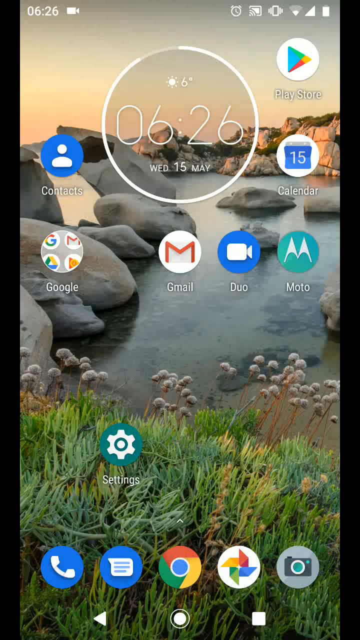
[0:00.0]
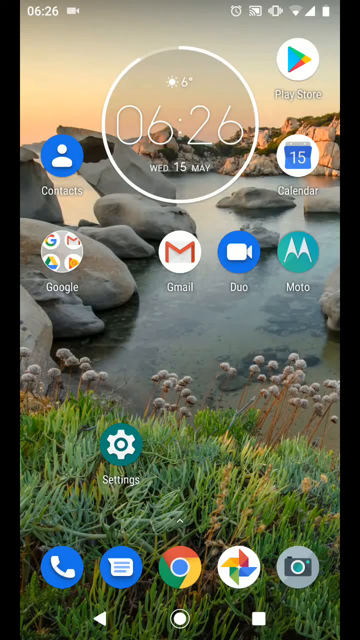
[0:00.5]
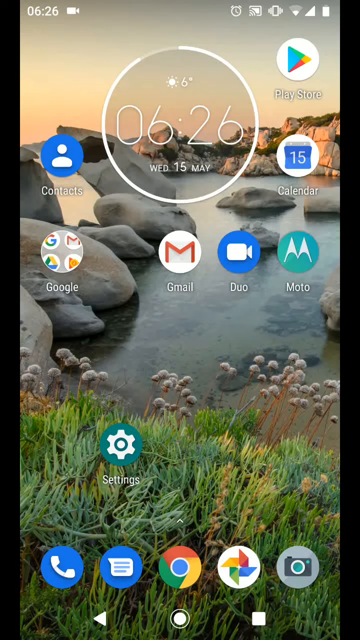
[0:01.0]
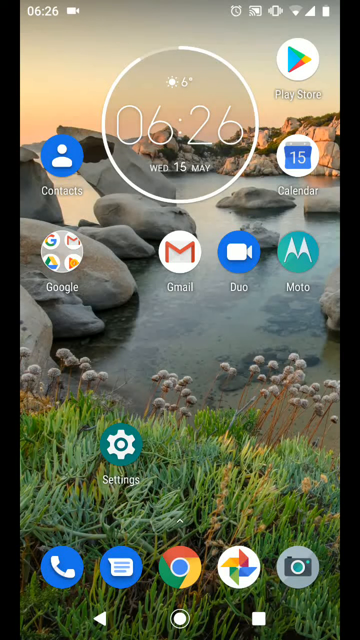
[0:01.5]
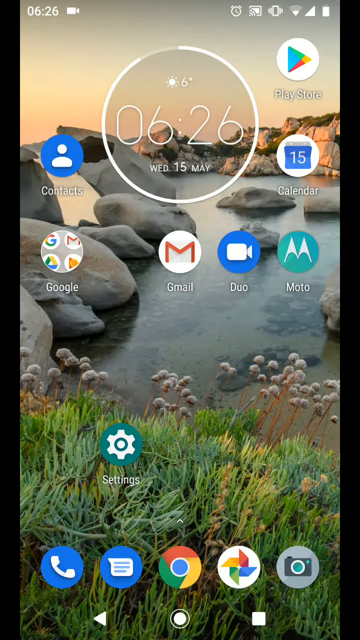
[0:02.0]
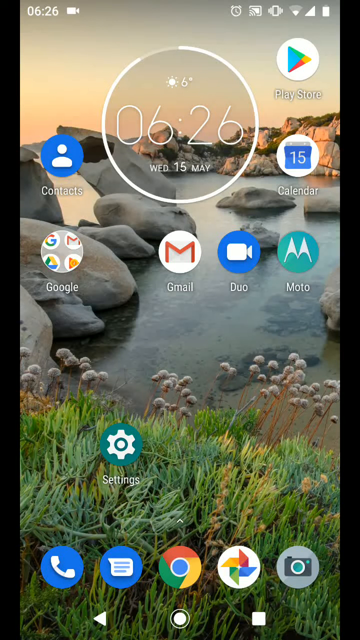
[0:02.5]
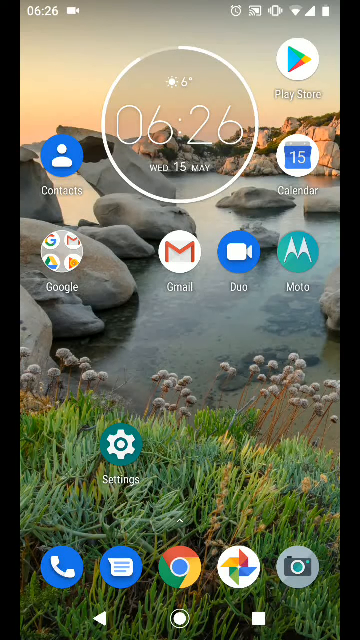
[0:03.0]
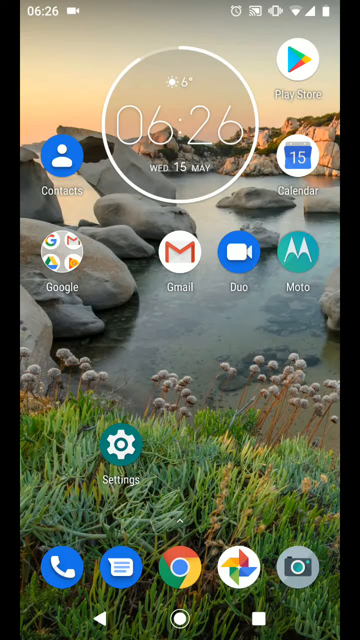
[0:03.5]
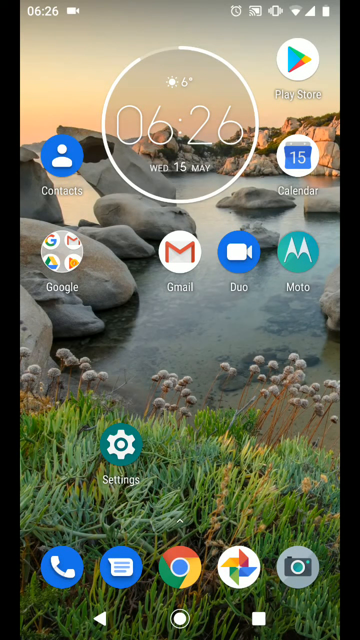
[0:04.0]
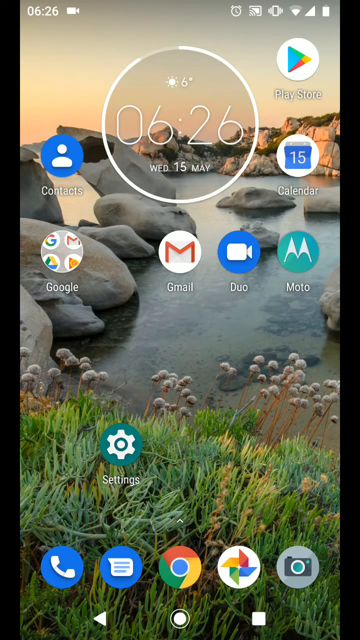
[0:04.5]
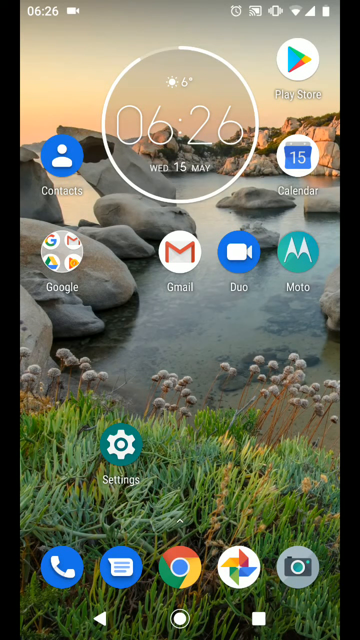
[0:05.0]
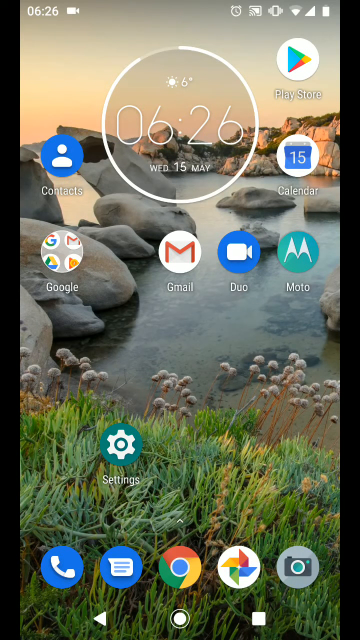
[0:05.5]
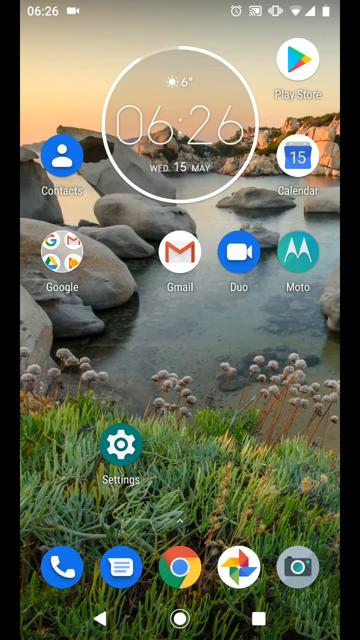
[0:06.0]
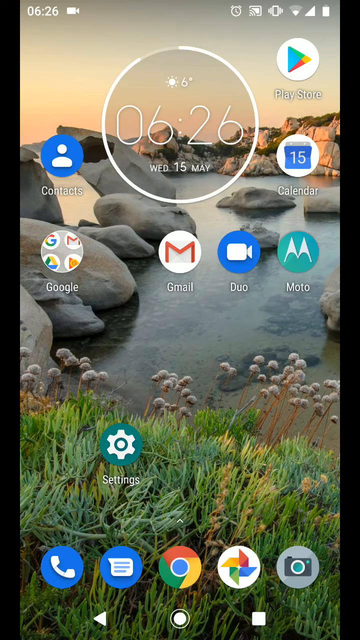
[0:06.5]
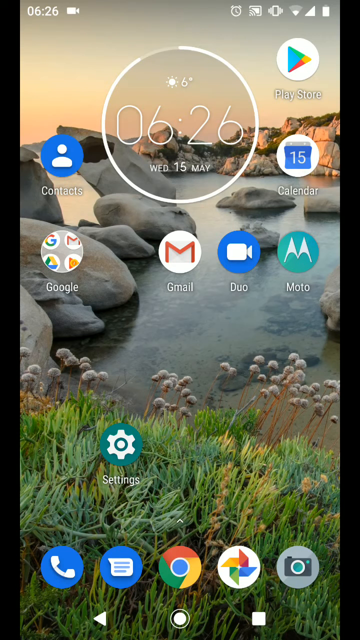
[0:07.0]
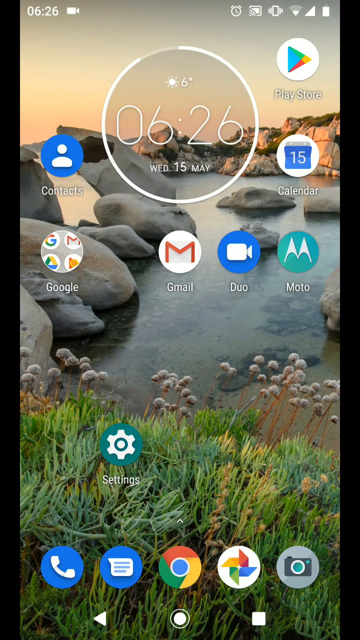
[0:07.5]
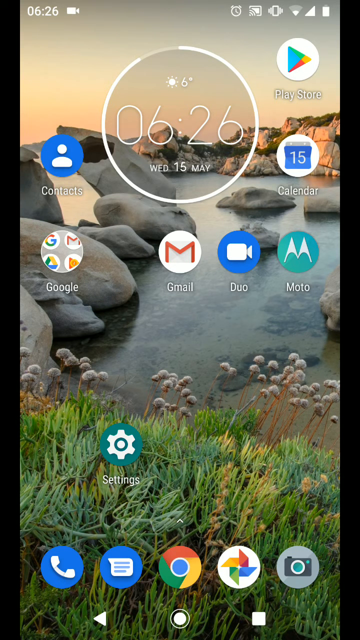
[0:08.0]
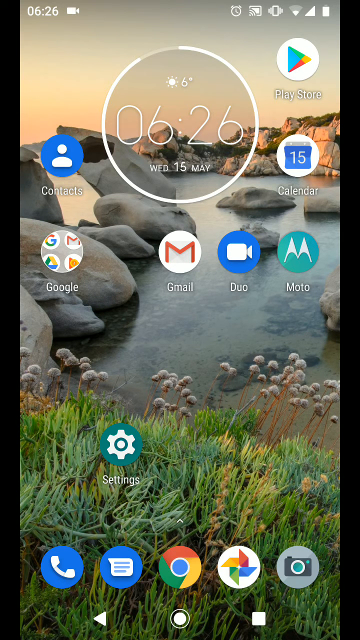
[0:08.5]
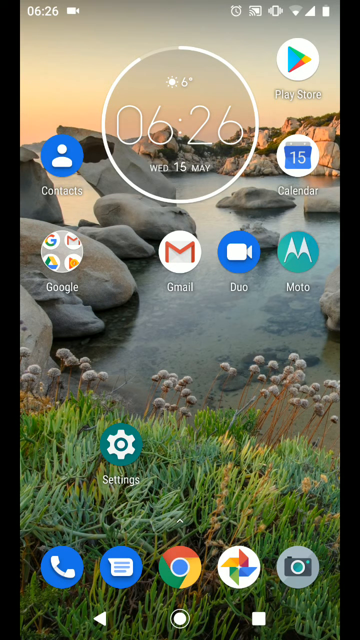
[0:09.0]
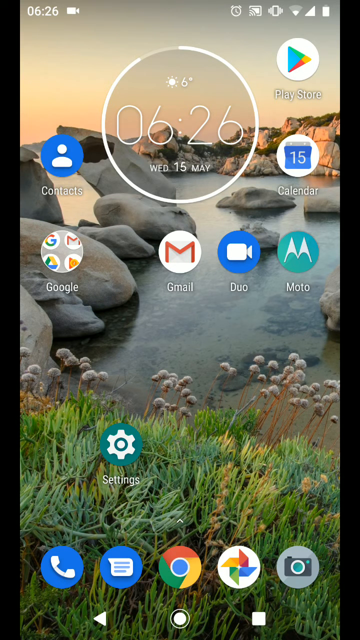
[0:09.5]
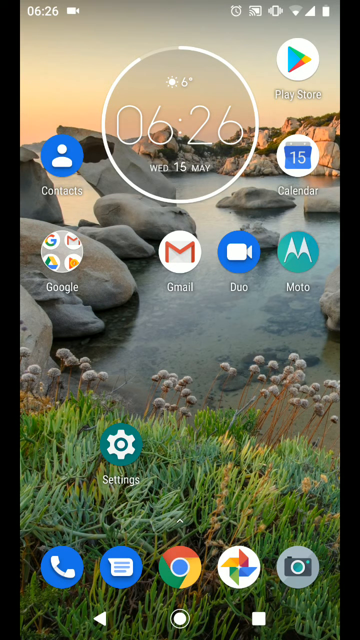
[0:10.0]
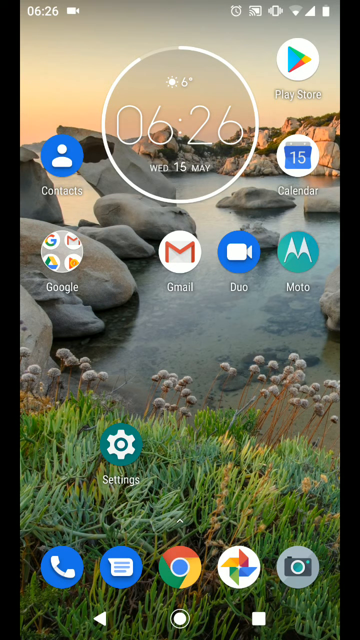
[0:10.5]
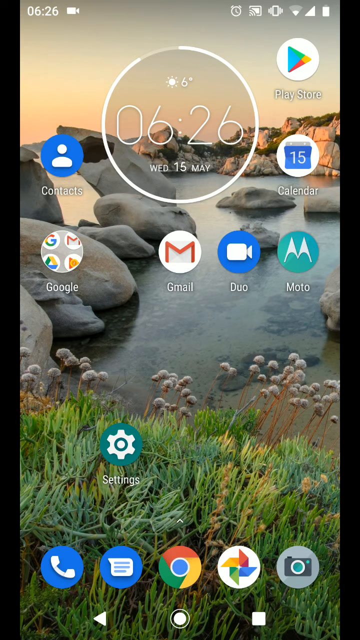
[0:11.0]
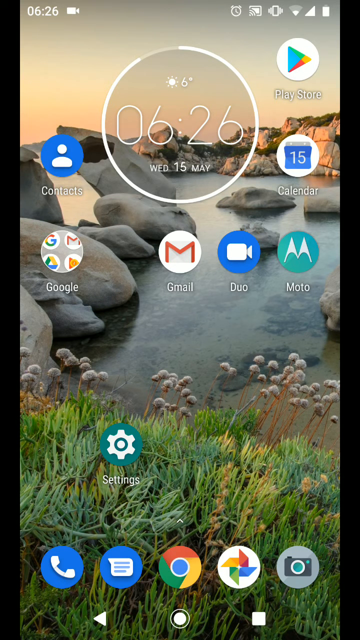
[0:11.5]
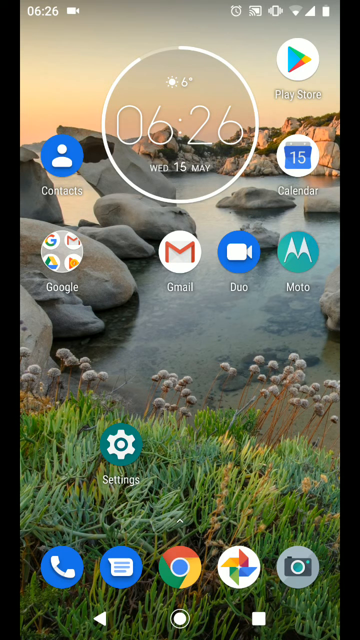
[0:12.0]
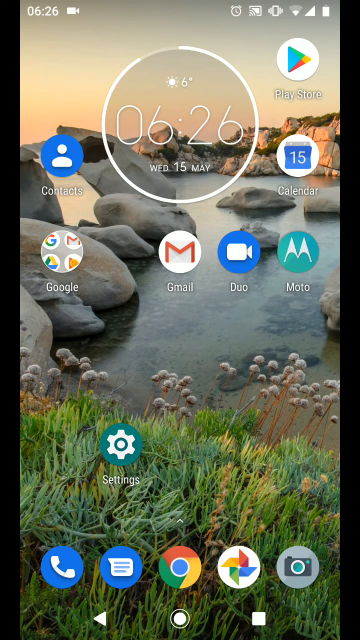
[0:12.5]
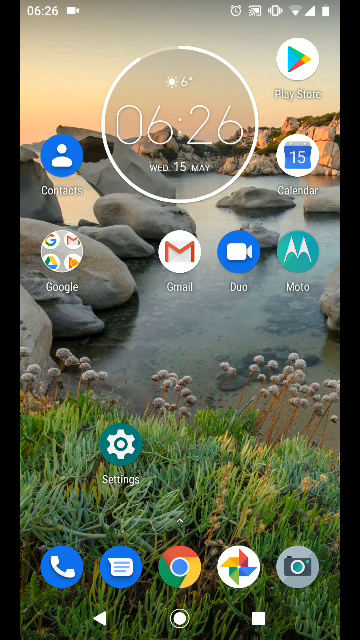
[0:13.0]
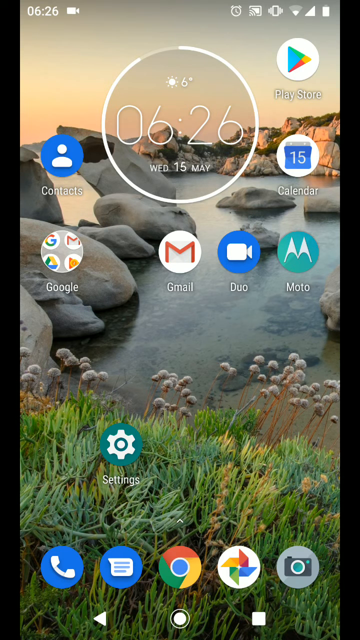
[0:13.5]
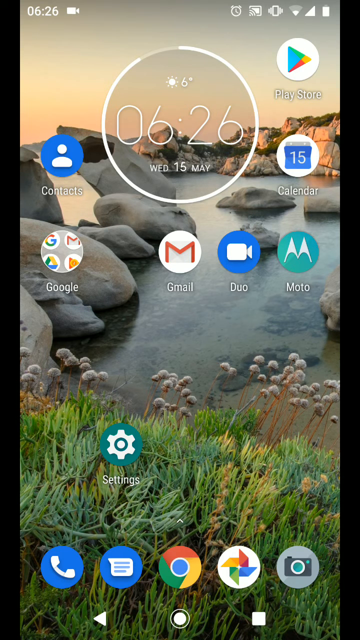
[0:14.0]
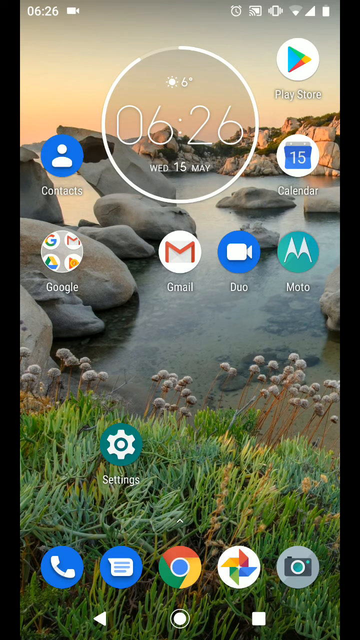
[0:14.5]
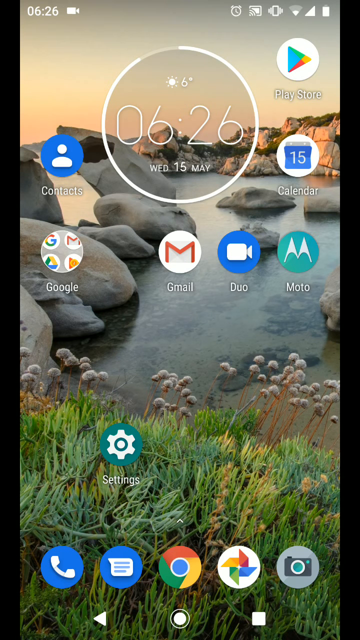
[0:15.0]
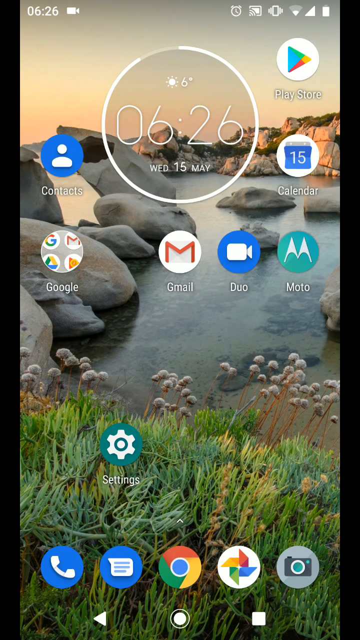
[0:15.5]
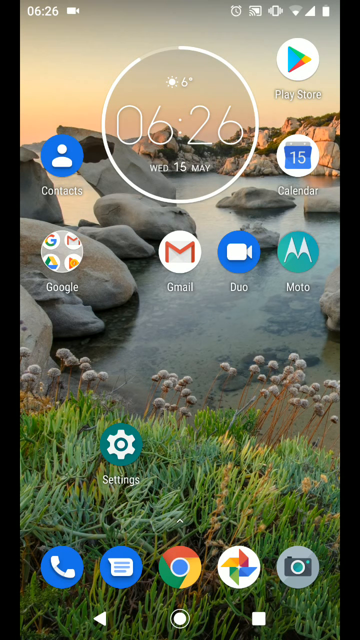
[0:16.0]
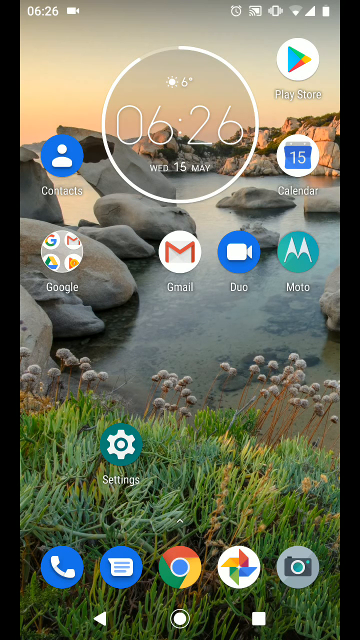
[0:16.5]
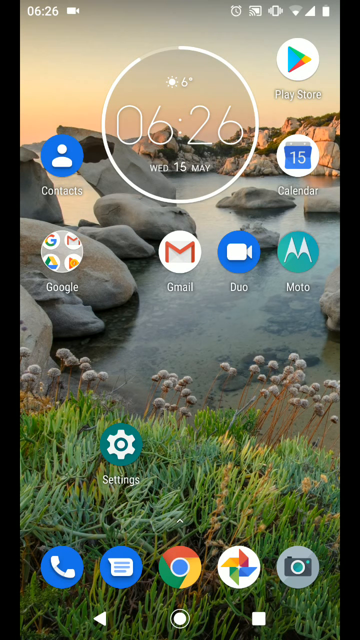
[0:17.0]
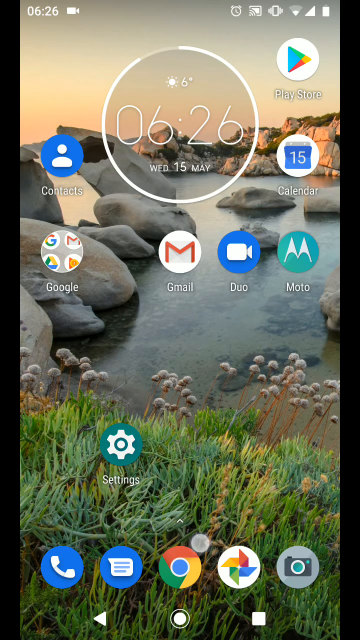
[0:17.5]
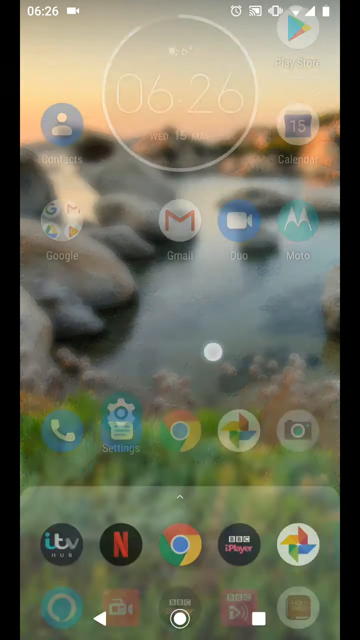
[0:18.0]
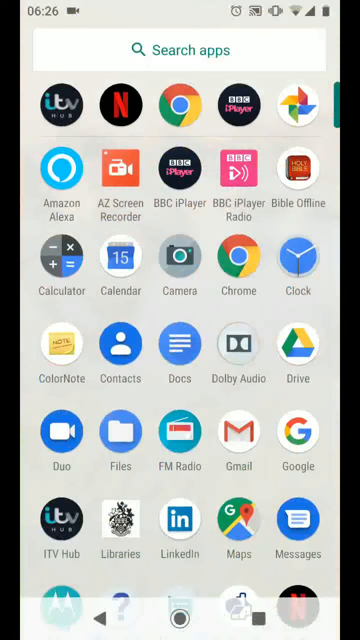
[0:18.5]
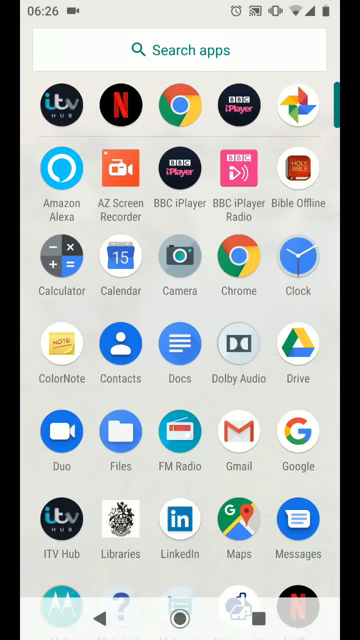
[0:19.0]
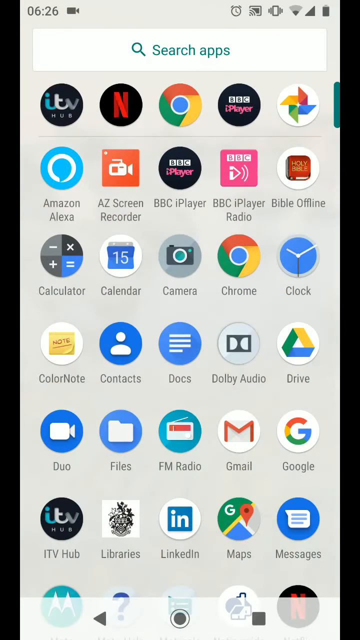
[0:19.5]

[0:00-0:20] A phone screen, presumably from an Android phone, shows its home screen with various icons. The time reads 6:26, possibly in the morning, and the date reads "Wednesday, May the 15th". The background looks like water with huge rocks and grass by the side of the water. Various apps are on the front page. The bottom row holds call, messaging, photos, images and the Google icon. A settings icon is in the mid section, while the calendar and Google Play icons are at the top right, and the Moto icon is in the mid section. The mid section also has Duos, Gmail and Google, alongside a contact list.